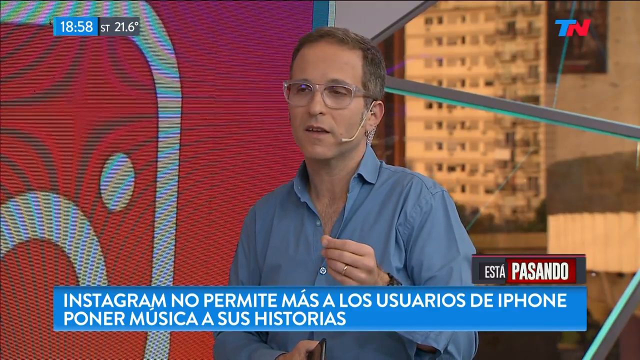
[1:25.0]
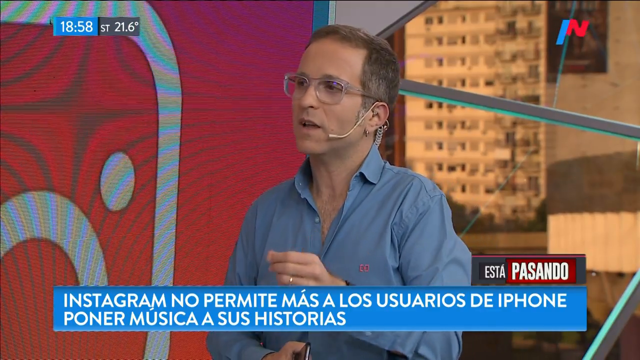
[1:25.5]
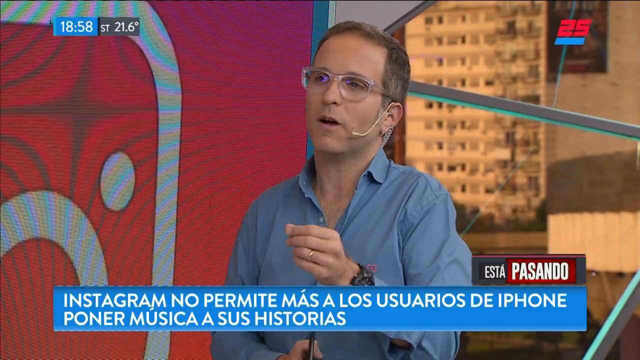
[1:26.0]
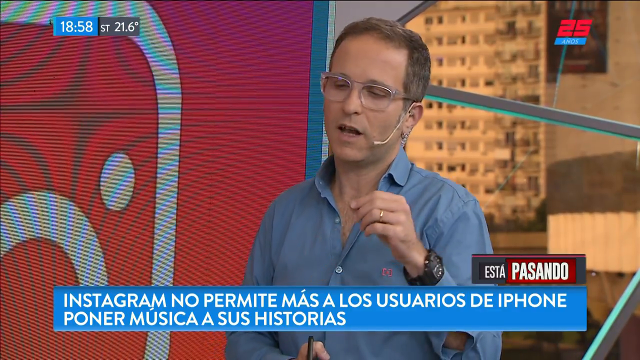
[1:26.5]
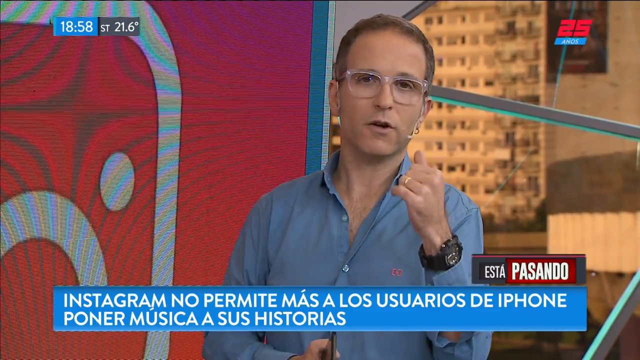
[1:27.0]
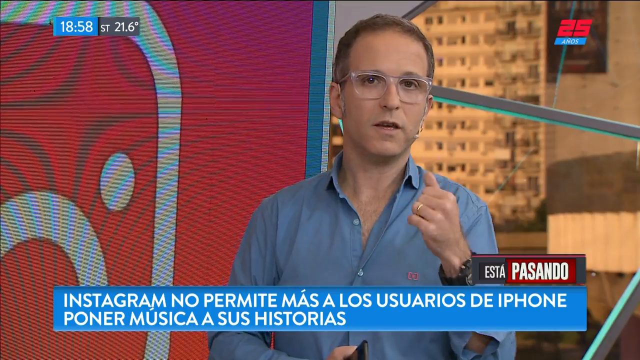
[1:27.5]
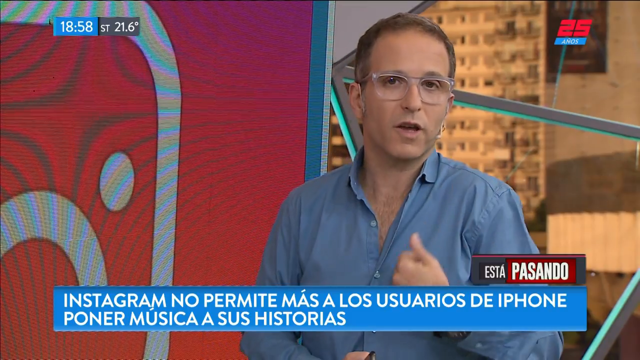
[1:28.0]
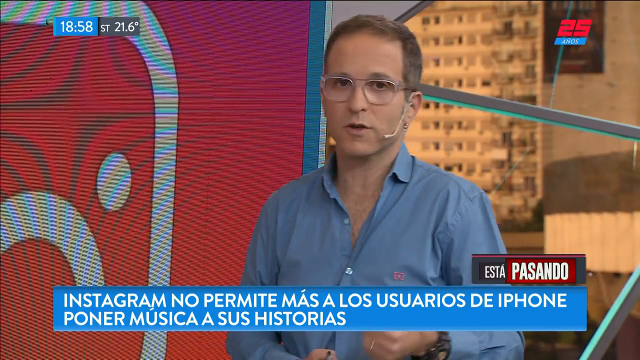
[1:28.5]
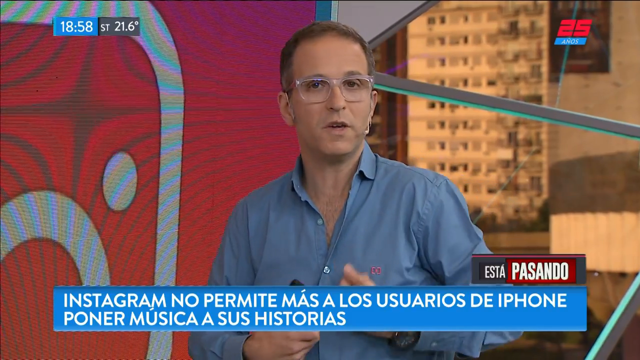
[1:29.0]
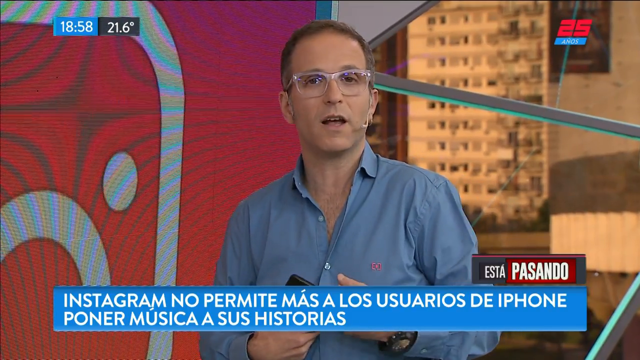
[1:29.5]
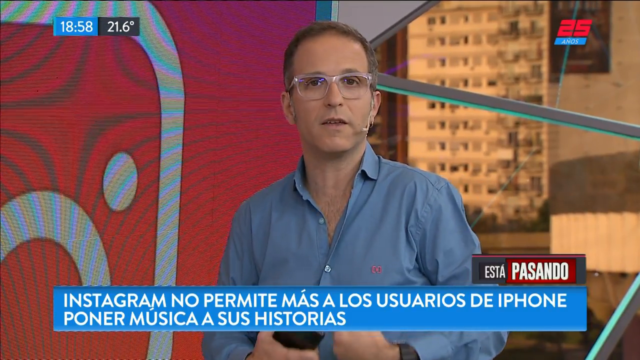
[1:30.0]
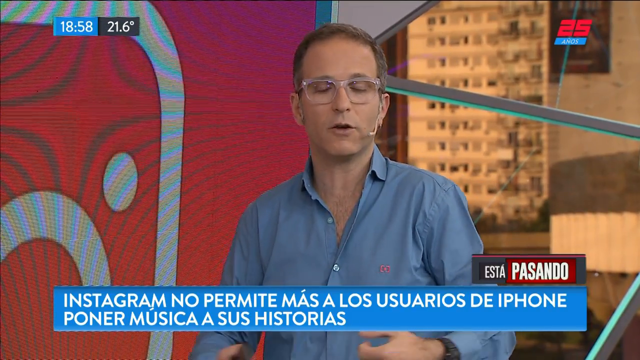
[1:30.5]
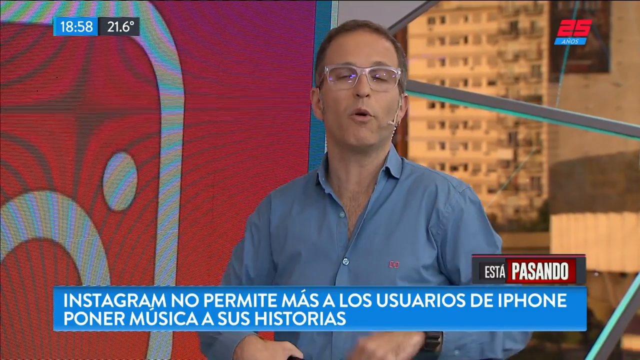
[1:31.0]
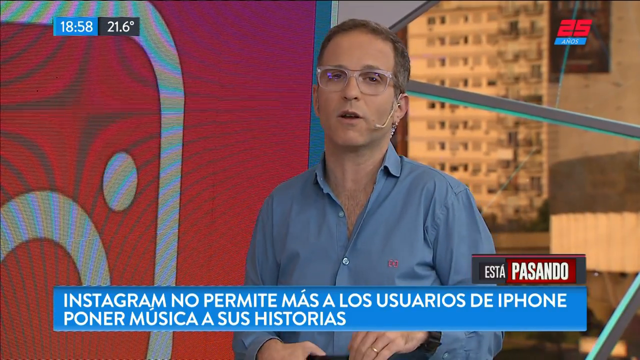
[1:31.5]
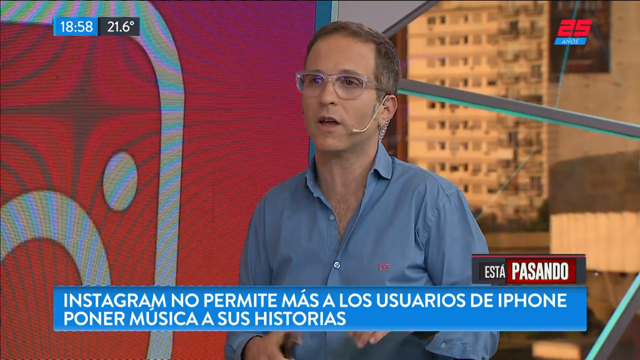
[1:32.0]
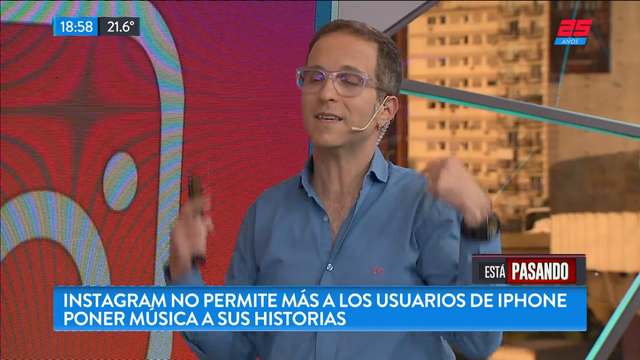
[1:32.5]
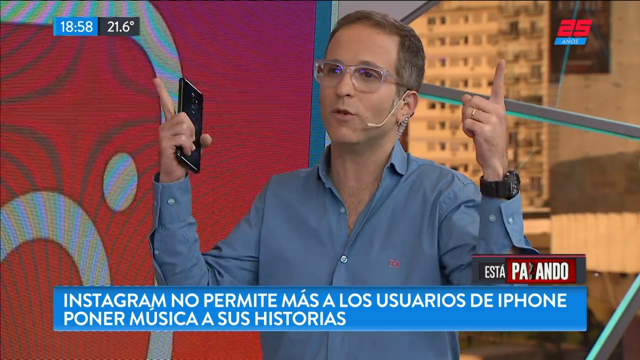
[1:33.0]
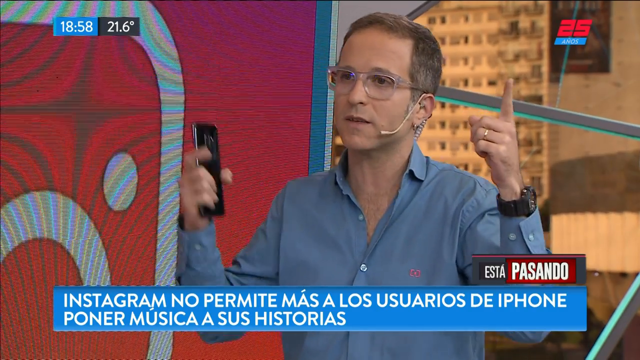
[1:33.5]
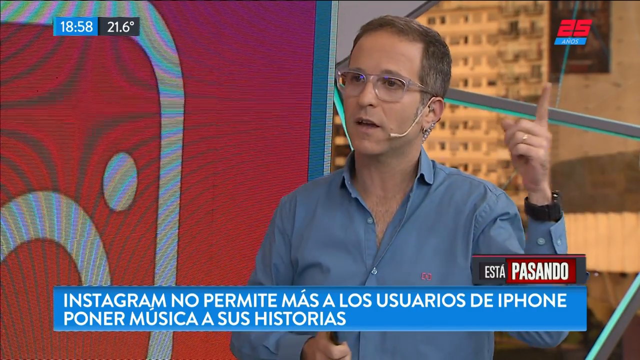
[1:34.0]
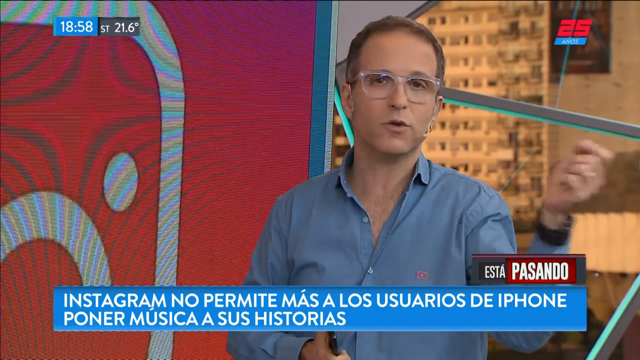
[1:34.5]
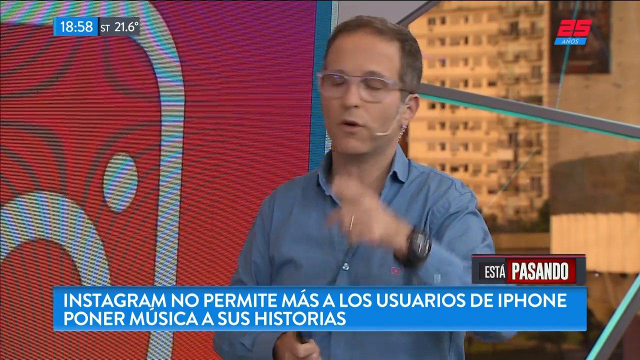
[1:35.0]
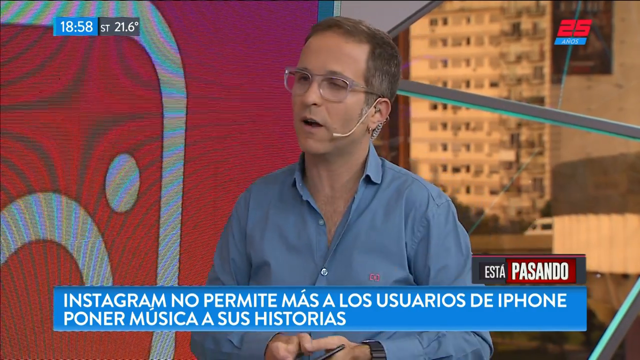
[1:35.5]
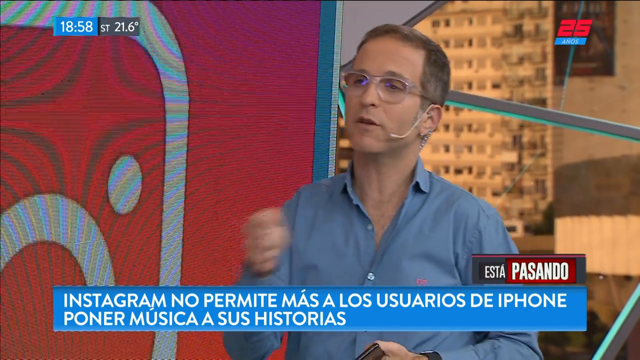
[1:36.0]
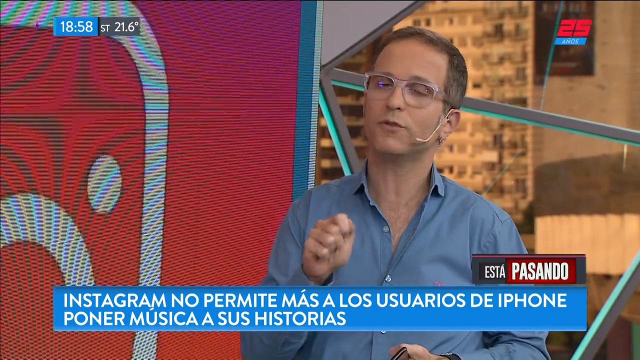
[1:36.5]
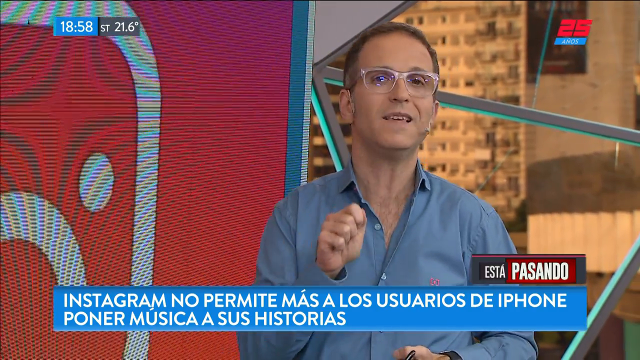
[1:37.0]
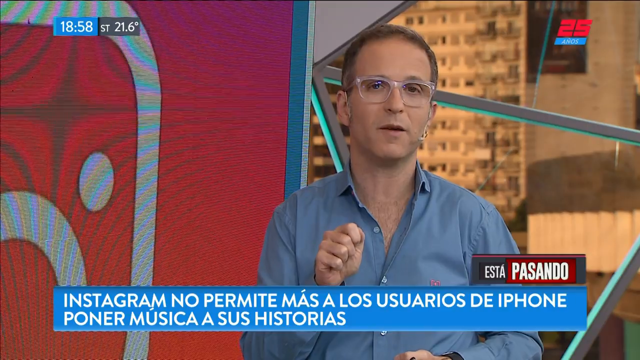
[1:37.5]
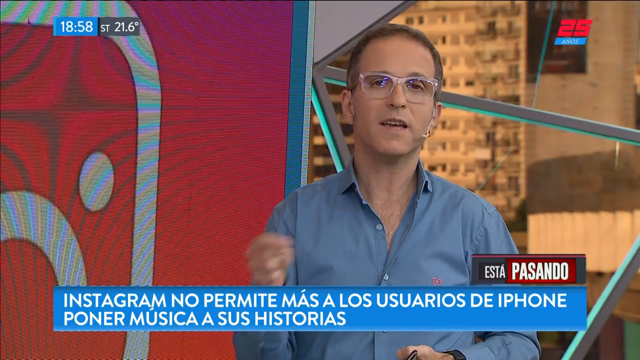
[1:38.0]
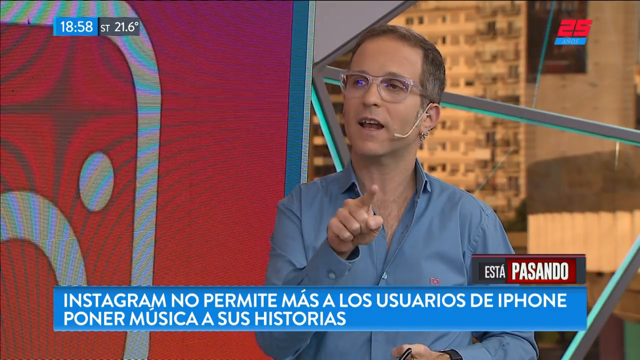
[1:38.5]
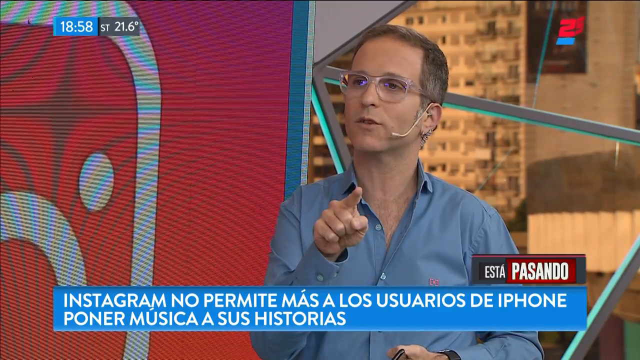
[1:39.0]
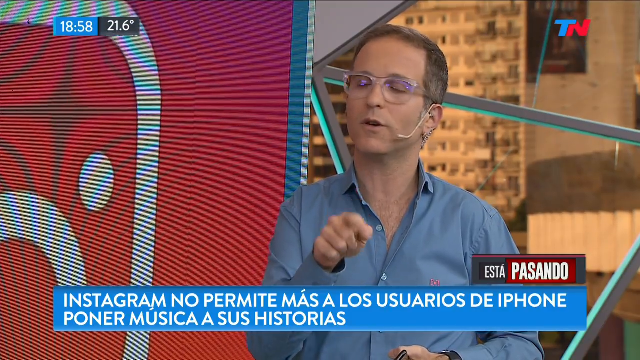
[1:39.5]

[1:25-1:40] The same man in khaki pants and a blue button-down shirt, holding the phone and wearing glasses, talks about Instagram not letting iPhone users put music in their stories, talking with his hands a bit. The TN 25 logo is still shown, and the view out the window behind him is still visible. The camera never zooms out.